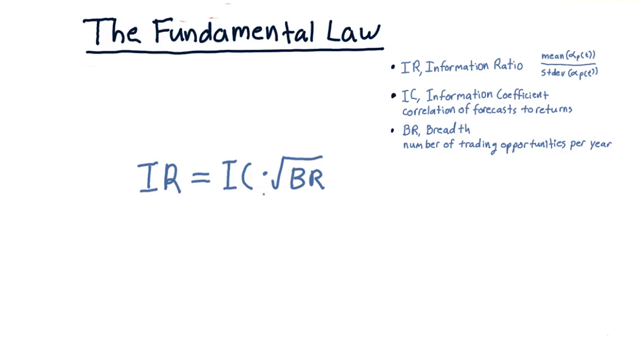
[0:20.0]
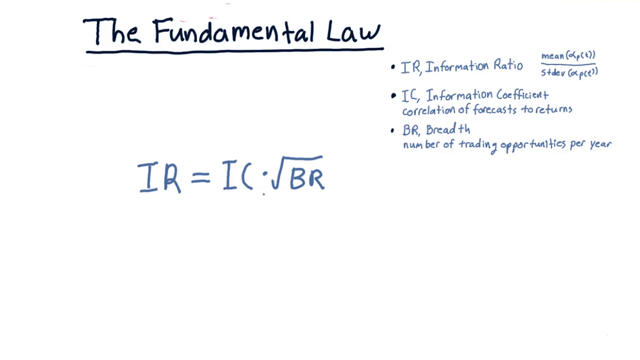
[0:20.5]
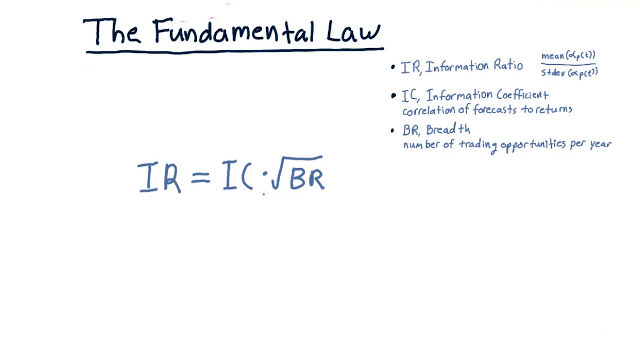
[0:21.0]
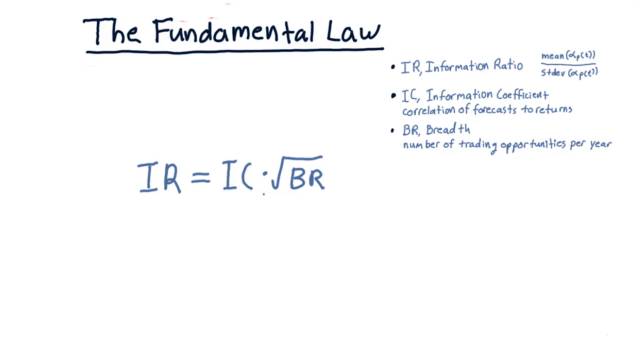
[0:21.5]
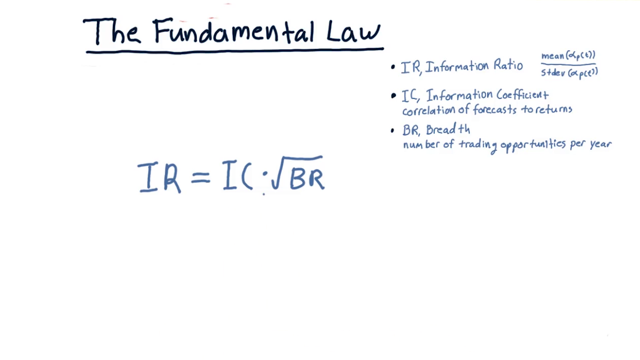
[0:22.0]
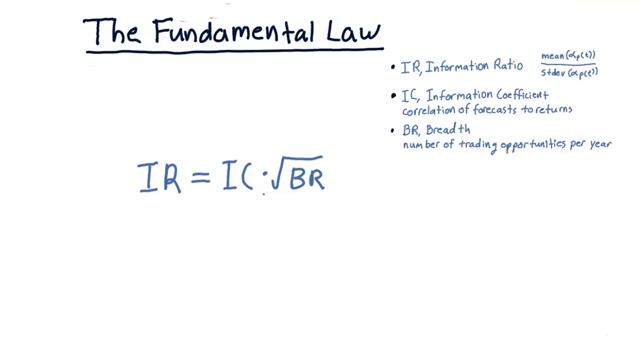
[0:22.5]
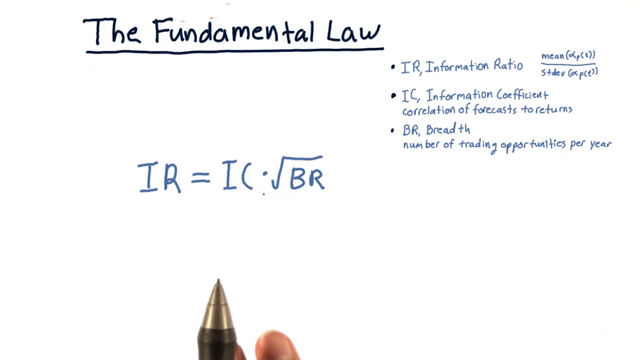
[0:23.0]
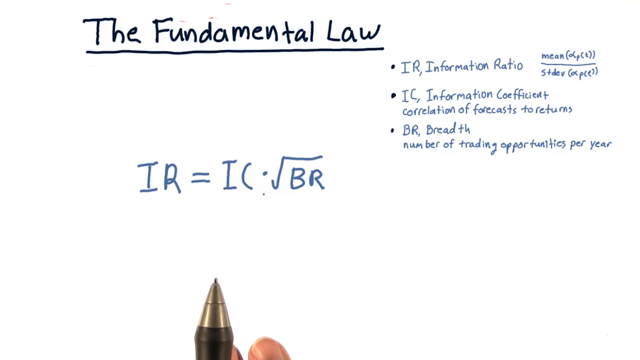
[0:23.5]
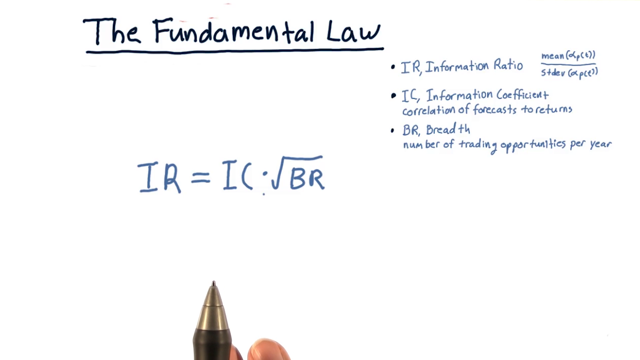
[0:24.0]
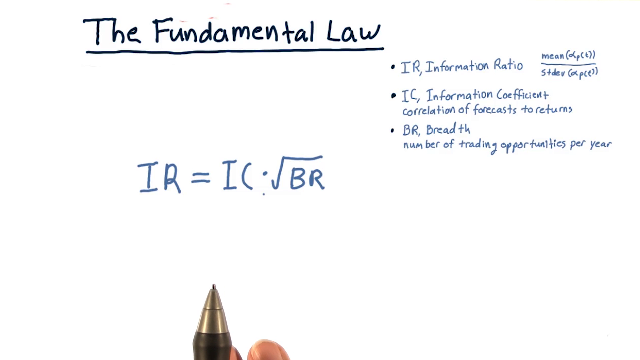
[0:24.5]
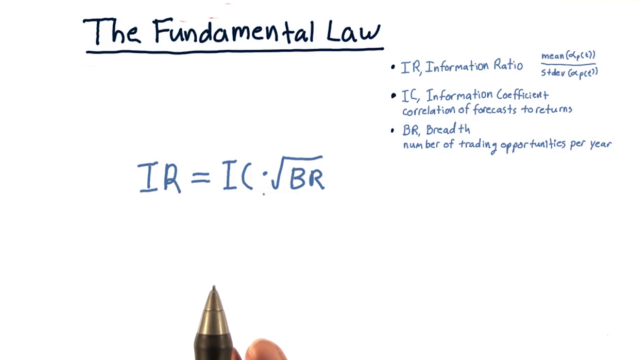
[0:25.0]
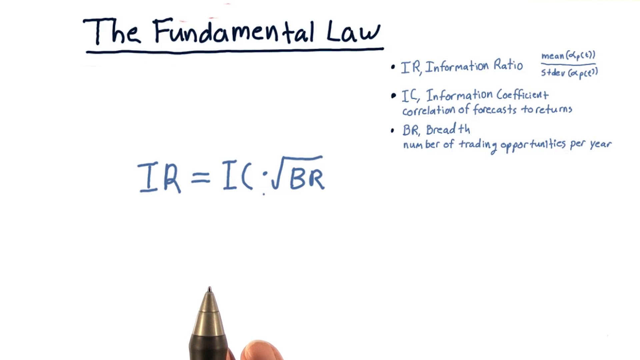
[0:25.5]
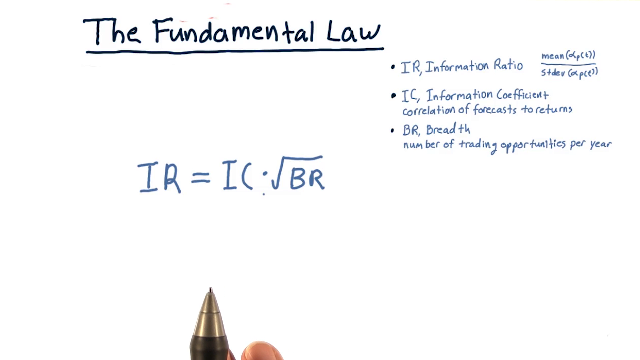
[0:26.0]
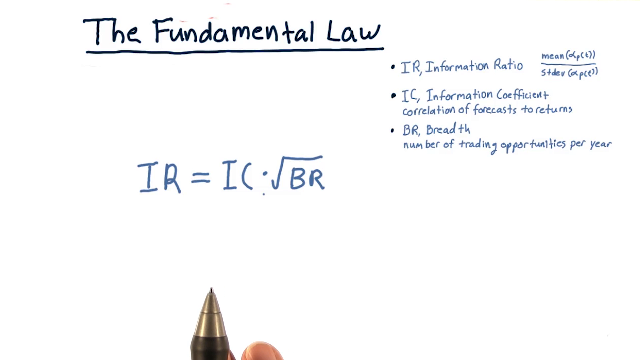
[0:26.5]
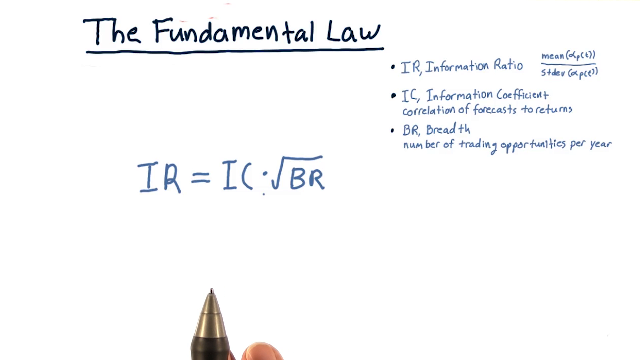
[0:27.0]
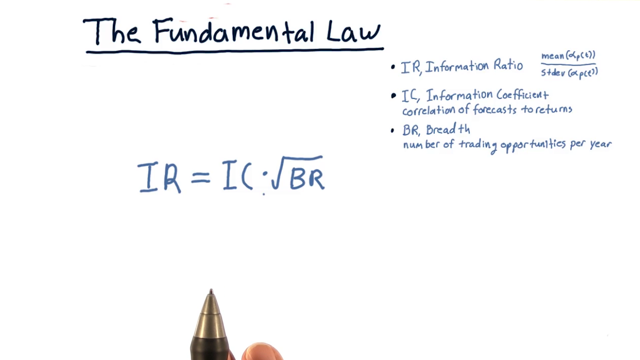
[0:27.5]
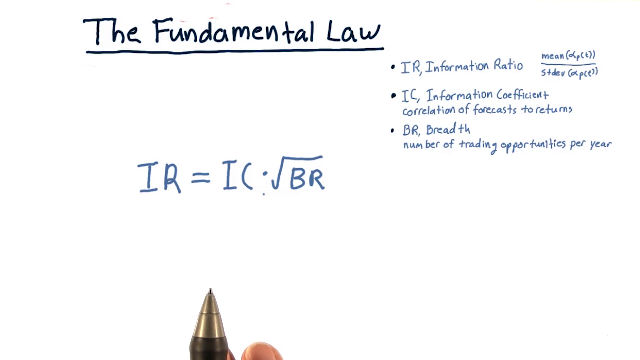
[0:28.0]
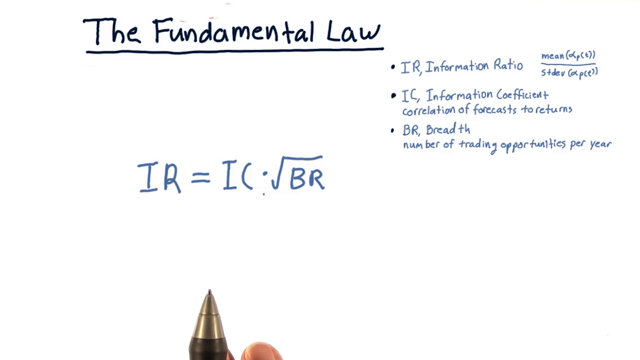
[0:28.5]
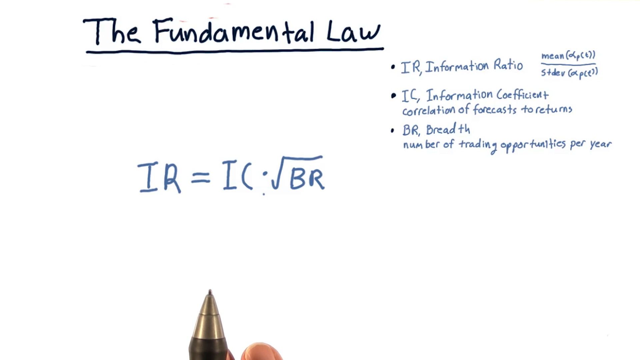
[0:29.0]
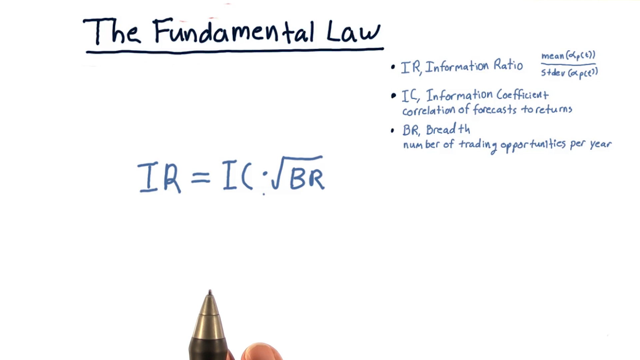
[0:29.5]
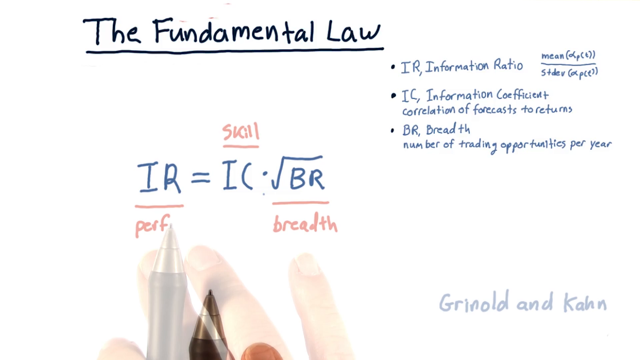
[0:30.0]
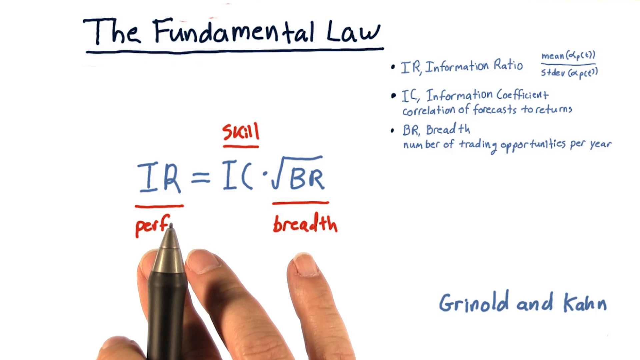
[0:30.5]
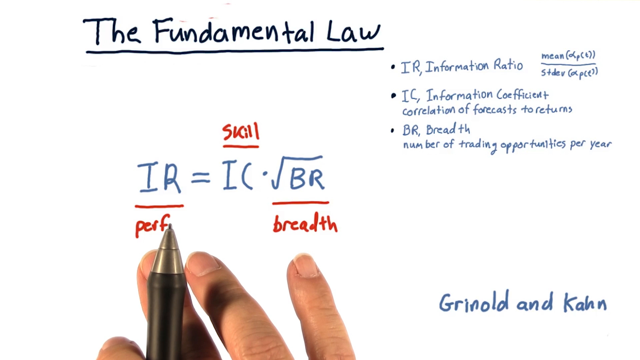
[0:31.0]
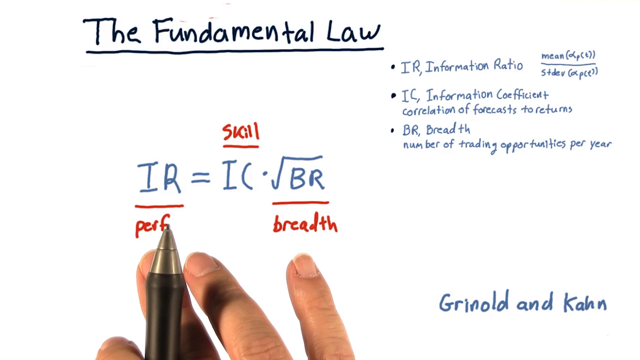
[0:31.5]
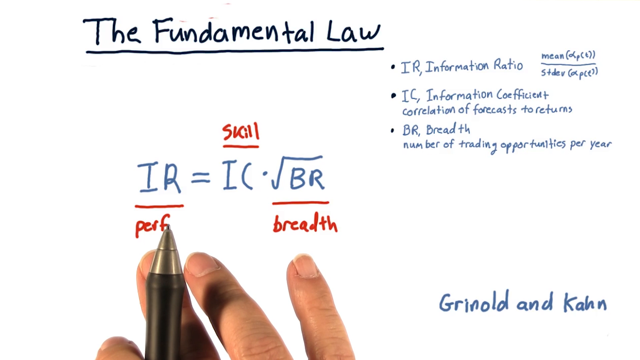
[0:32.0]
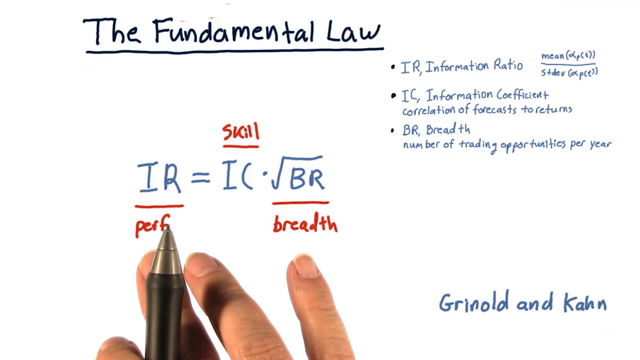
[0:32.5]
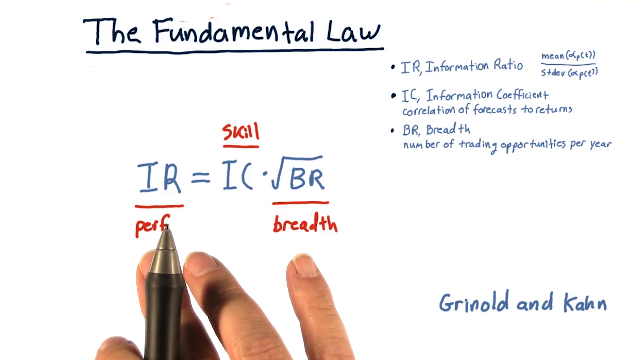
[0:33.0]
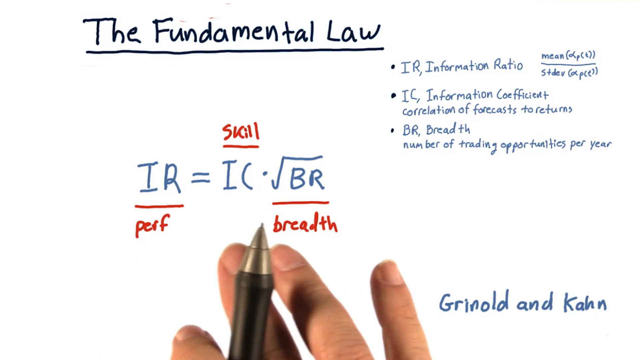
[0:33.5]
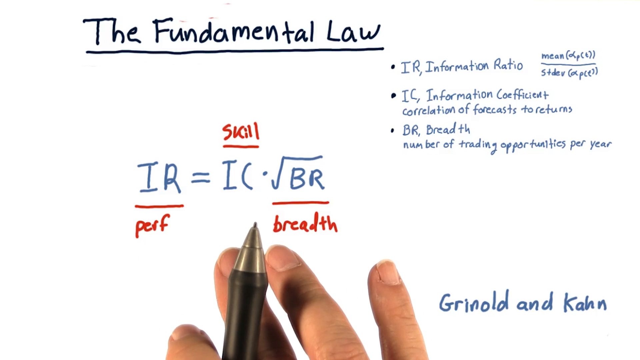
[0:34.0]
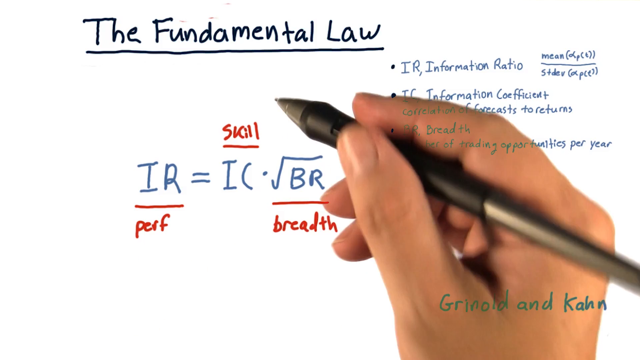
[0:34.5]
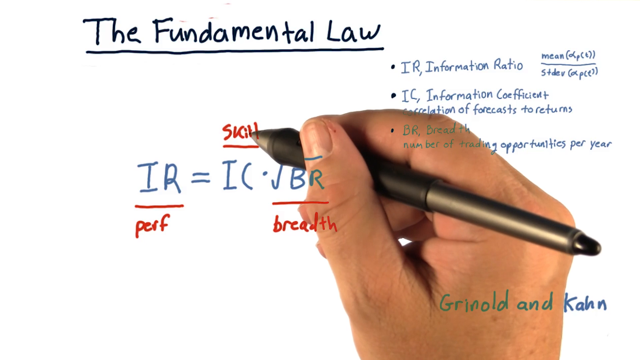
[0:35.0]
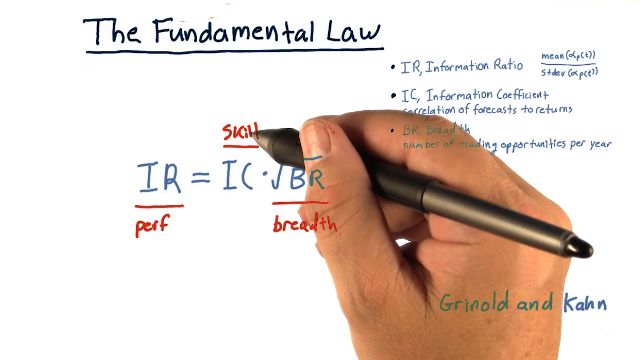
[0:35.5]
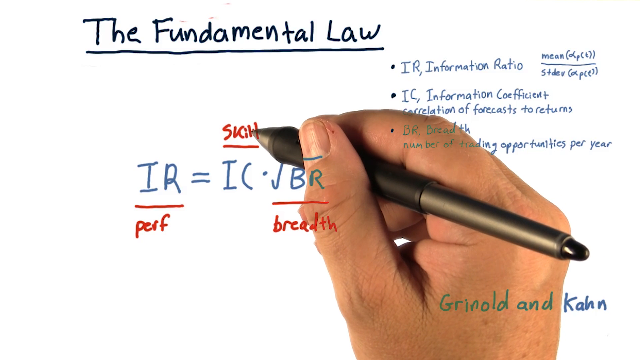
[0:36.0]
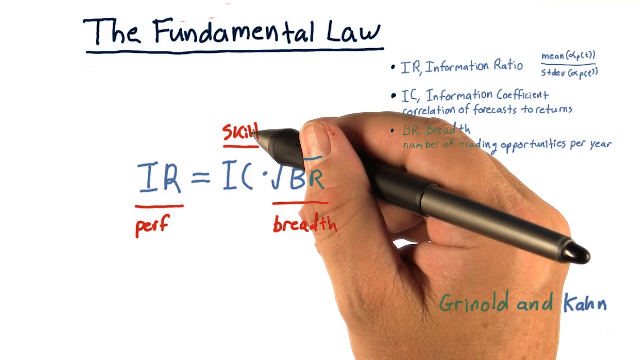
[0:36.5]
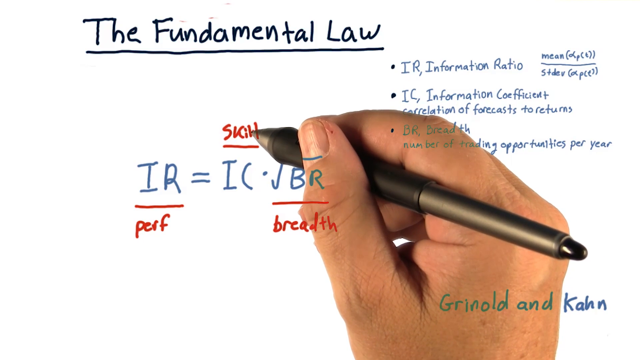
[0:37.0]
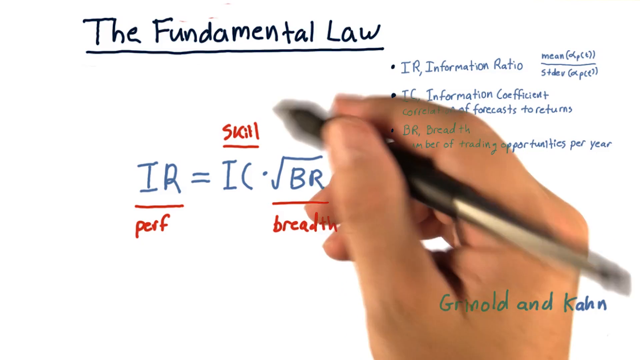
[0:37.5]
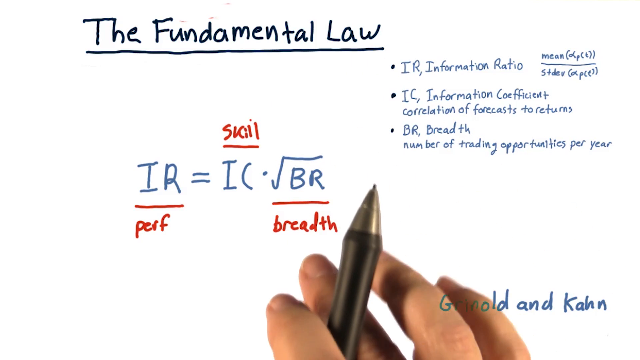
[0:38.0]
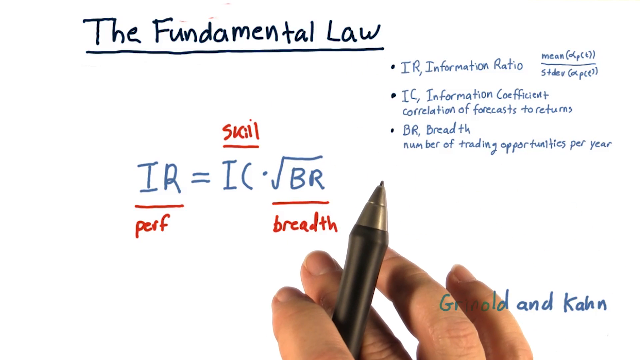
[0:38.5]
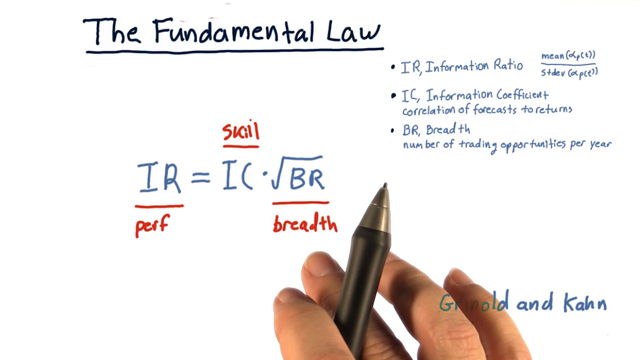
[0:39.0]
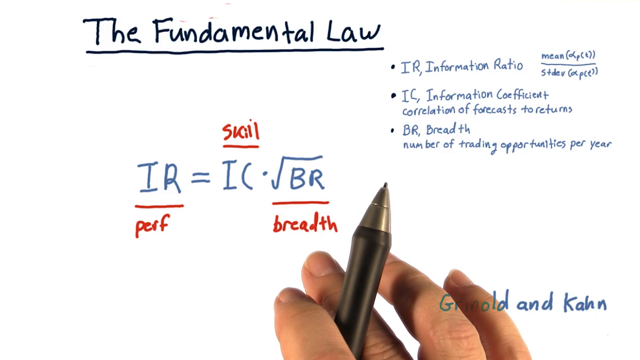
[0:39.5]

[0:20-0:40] The handwritten information is written in English and continues with the formula relating the information ratio to the information coefficient.